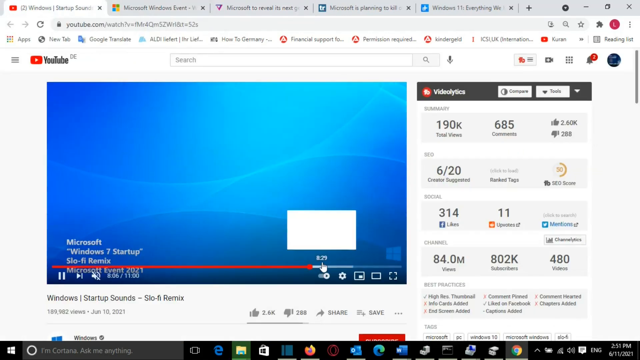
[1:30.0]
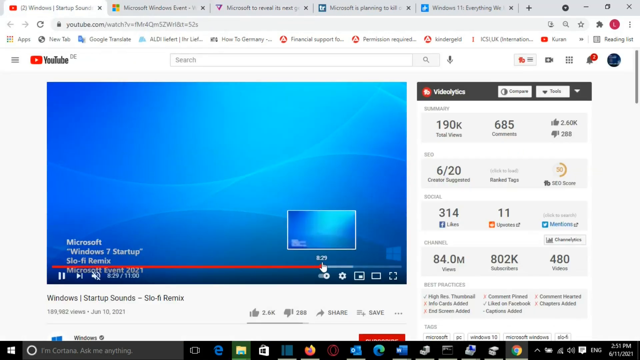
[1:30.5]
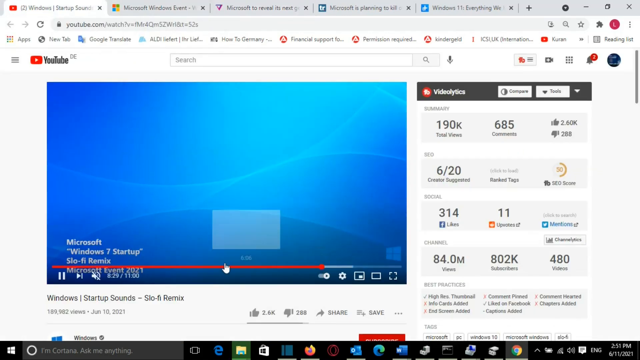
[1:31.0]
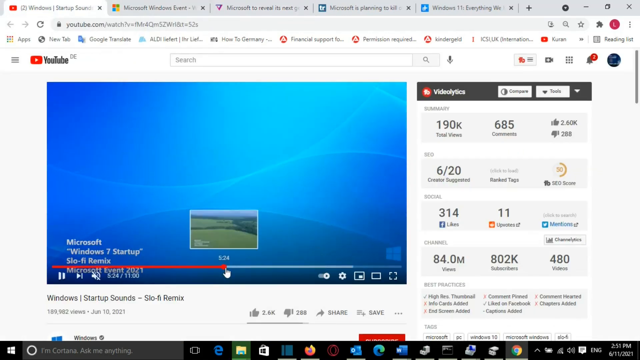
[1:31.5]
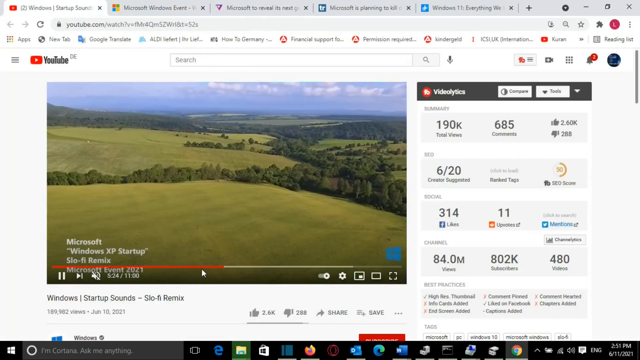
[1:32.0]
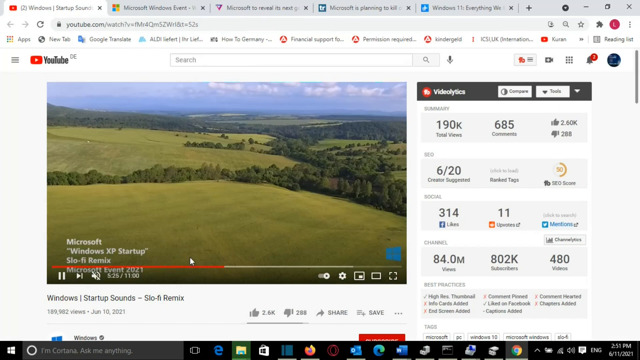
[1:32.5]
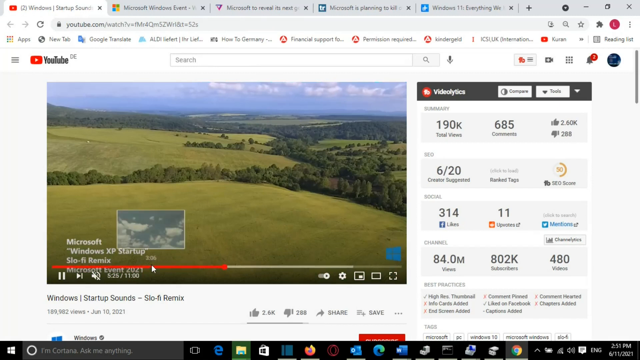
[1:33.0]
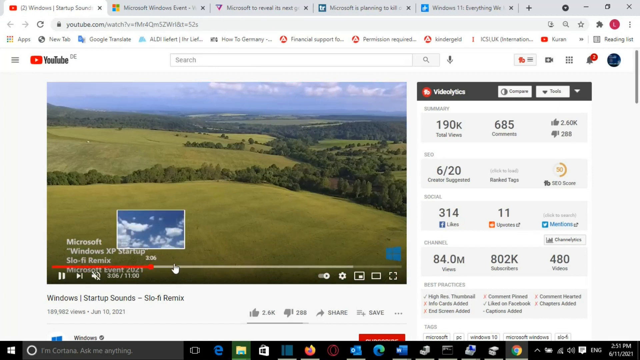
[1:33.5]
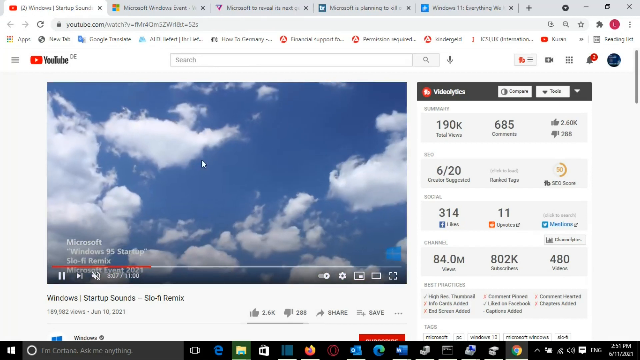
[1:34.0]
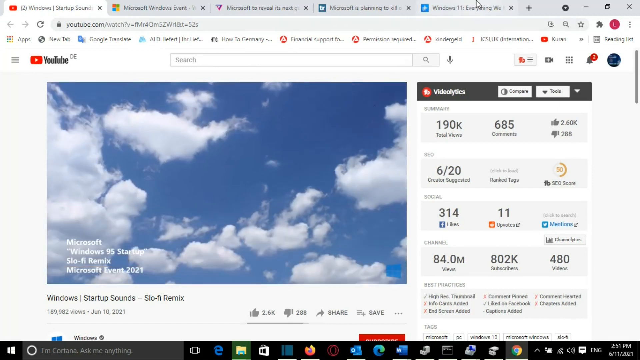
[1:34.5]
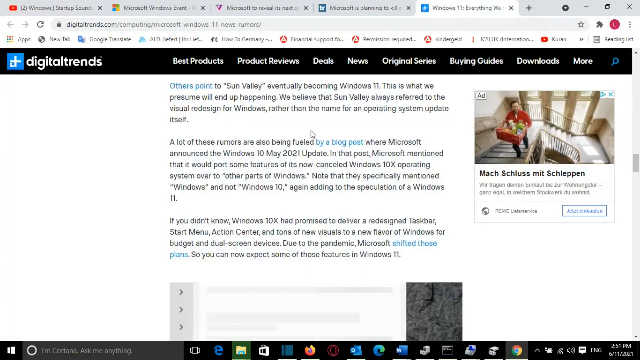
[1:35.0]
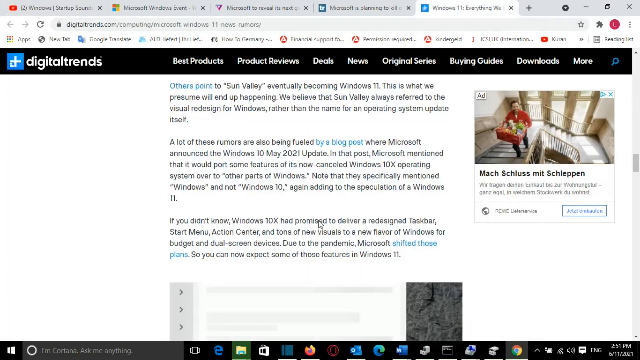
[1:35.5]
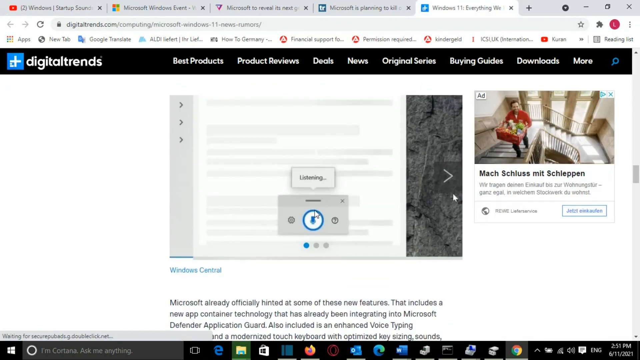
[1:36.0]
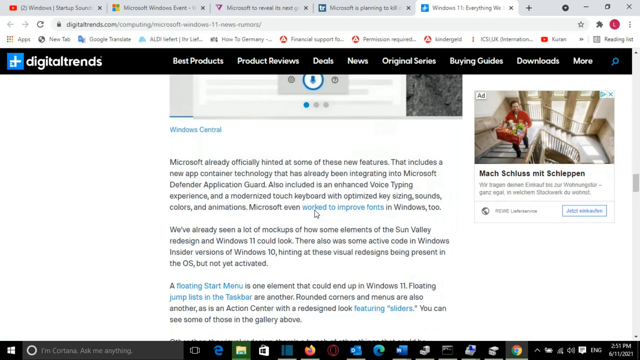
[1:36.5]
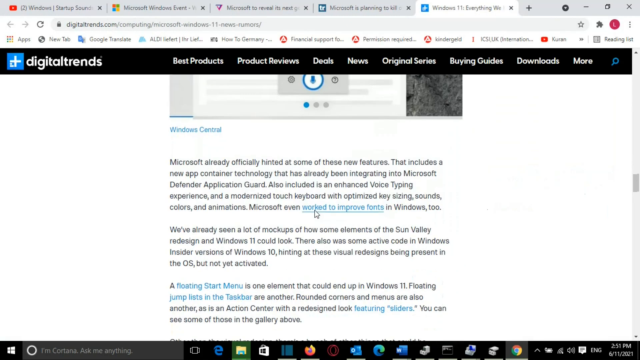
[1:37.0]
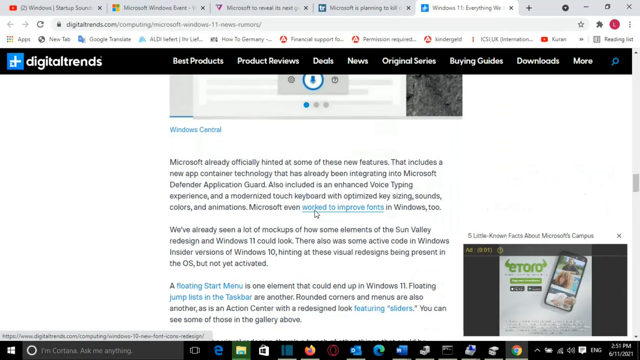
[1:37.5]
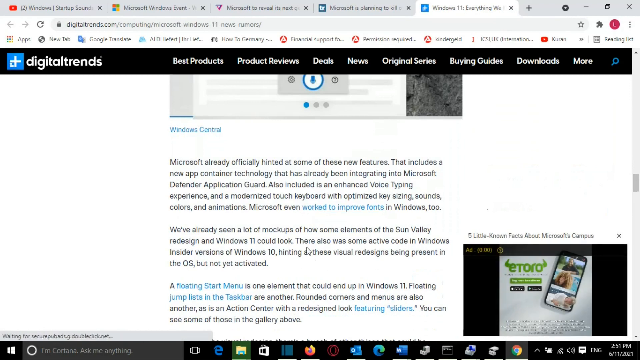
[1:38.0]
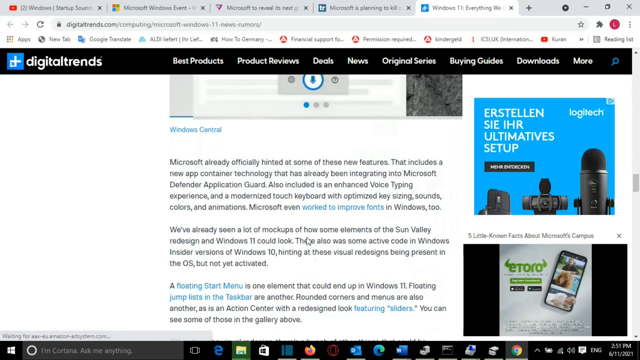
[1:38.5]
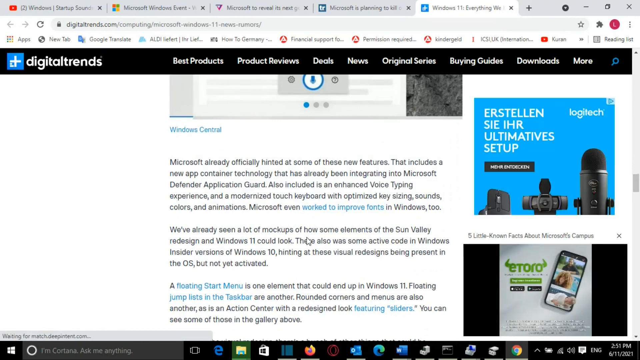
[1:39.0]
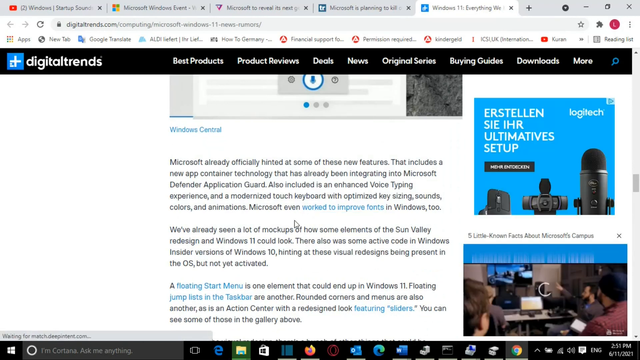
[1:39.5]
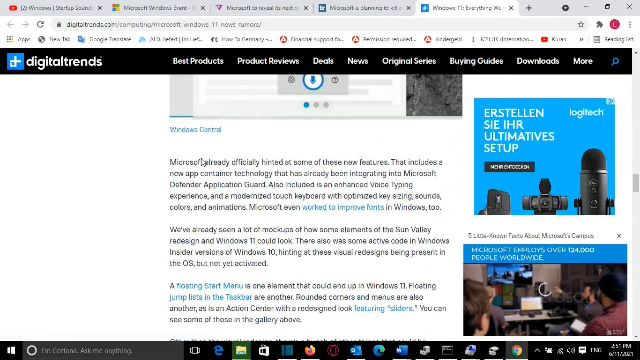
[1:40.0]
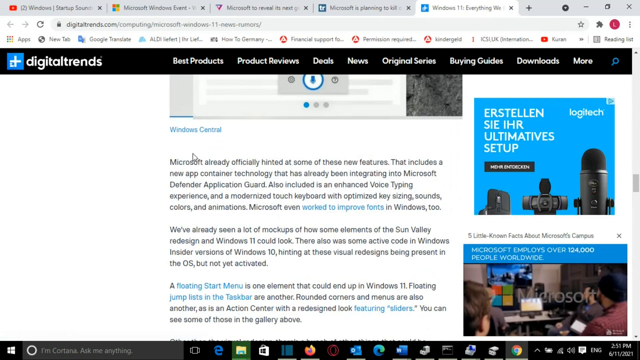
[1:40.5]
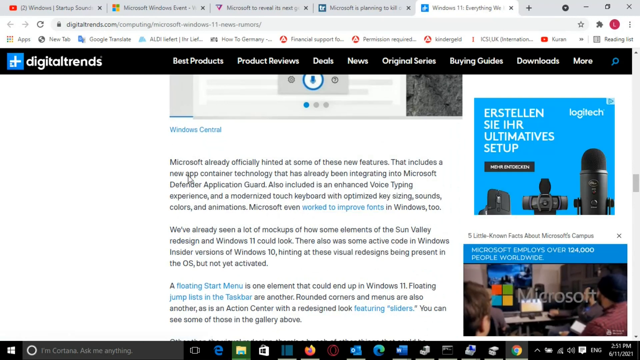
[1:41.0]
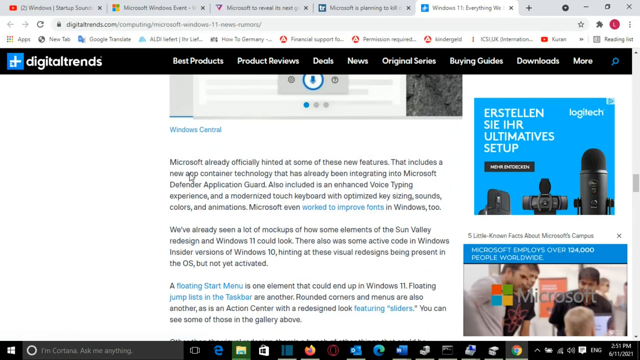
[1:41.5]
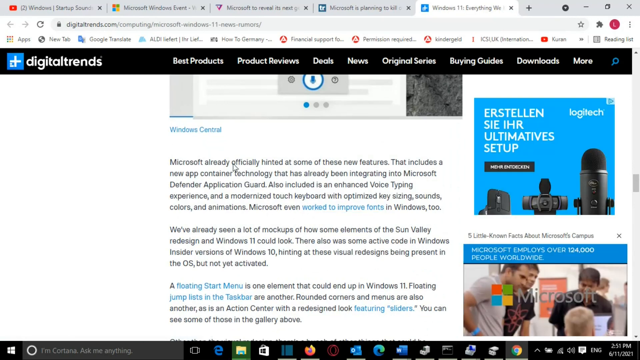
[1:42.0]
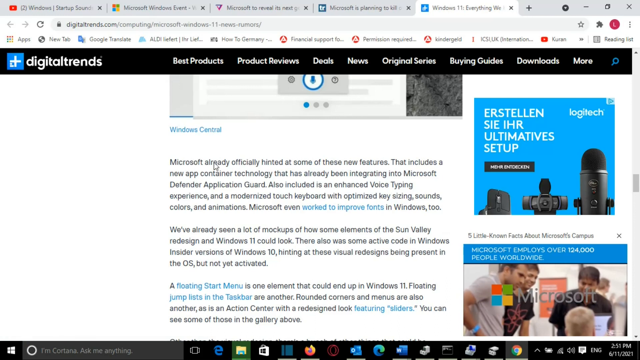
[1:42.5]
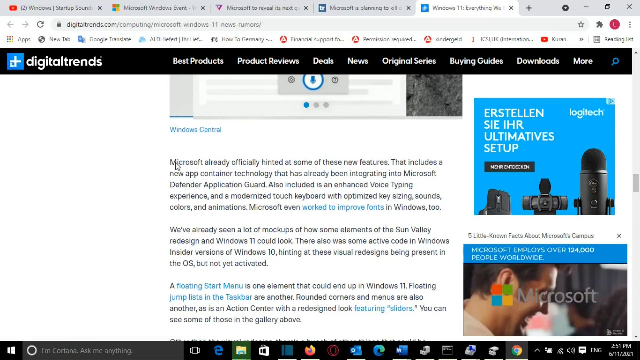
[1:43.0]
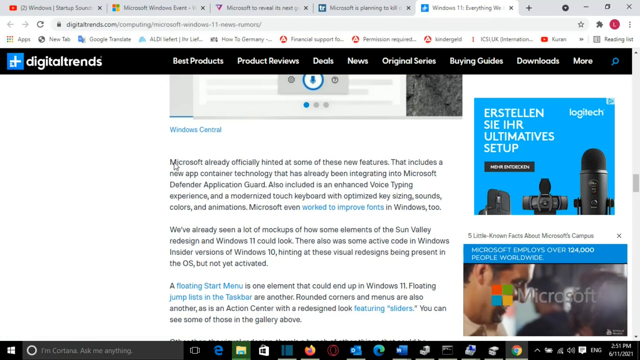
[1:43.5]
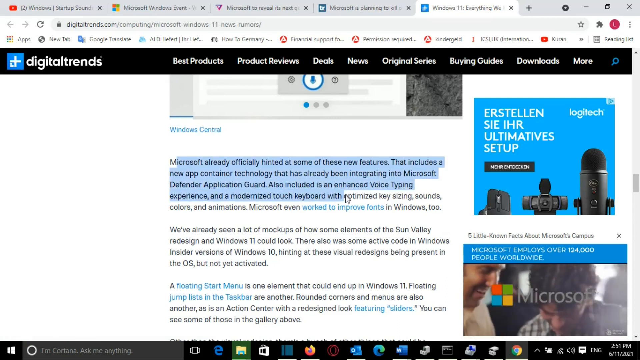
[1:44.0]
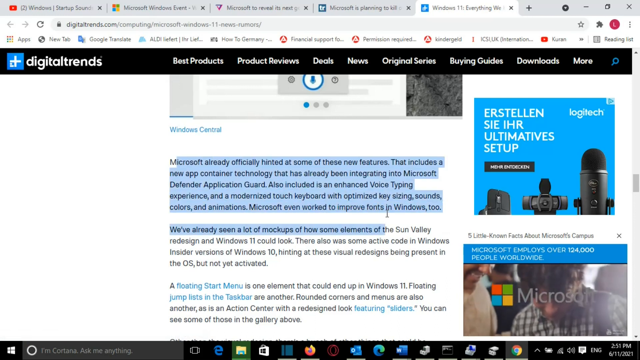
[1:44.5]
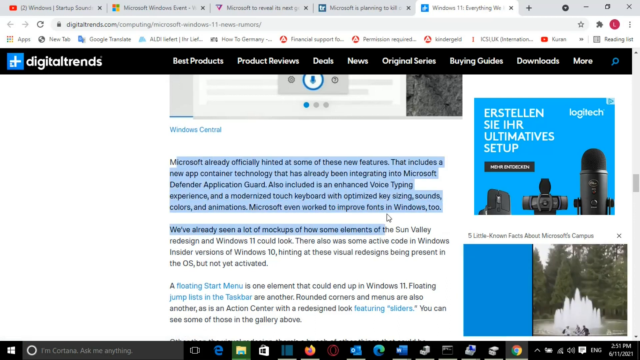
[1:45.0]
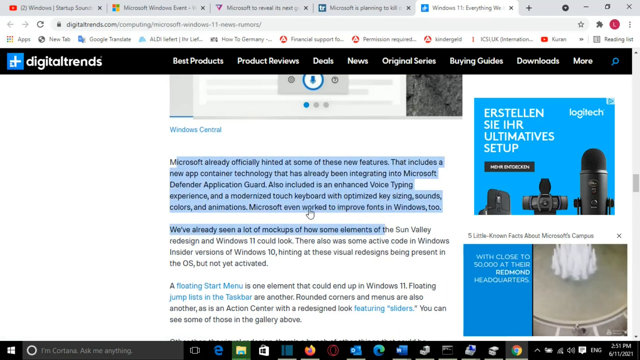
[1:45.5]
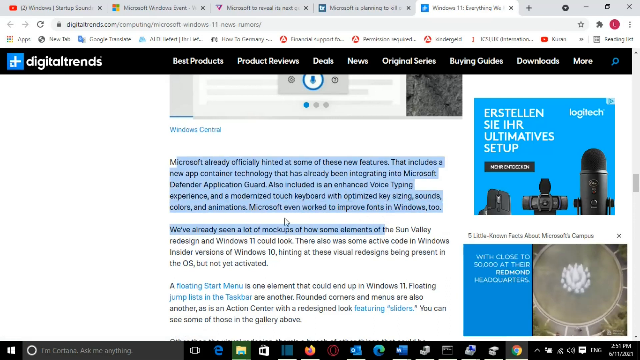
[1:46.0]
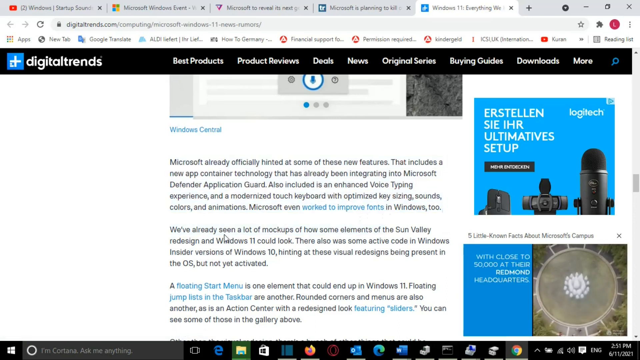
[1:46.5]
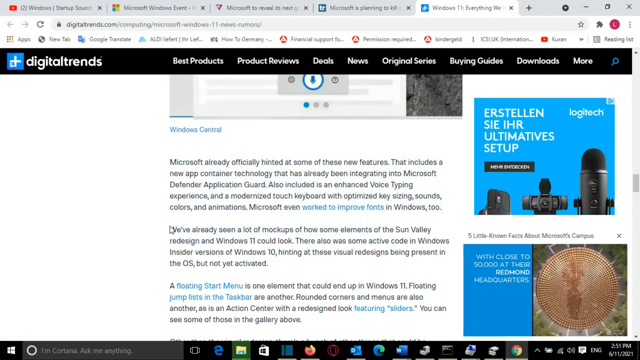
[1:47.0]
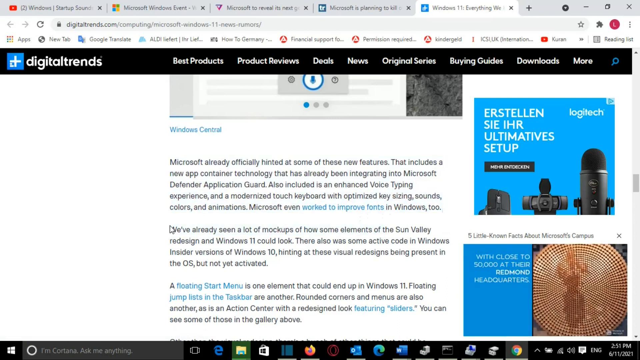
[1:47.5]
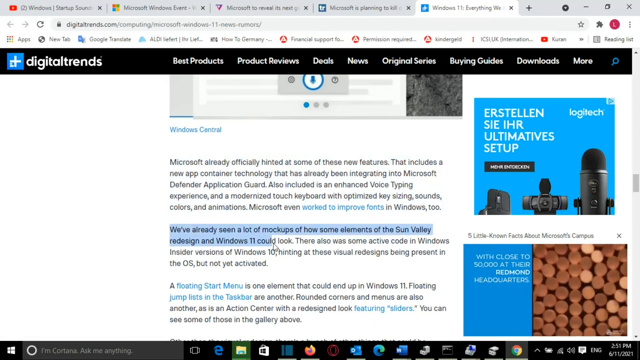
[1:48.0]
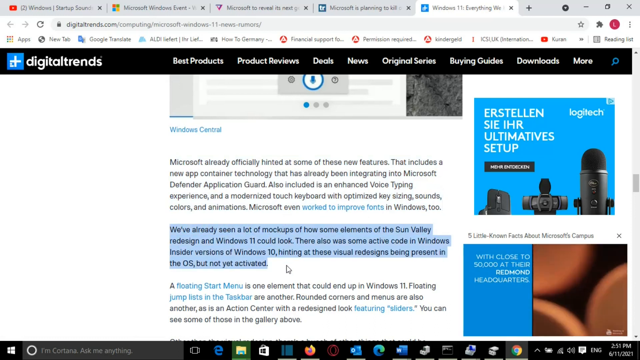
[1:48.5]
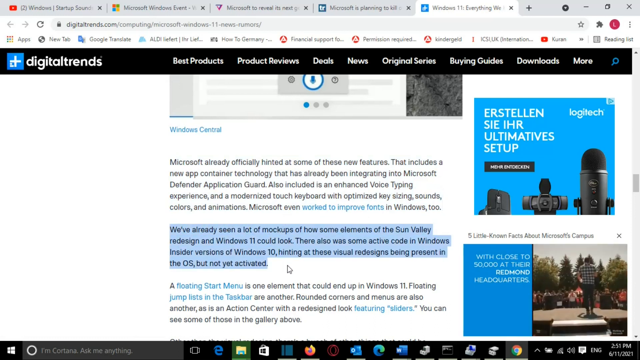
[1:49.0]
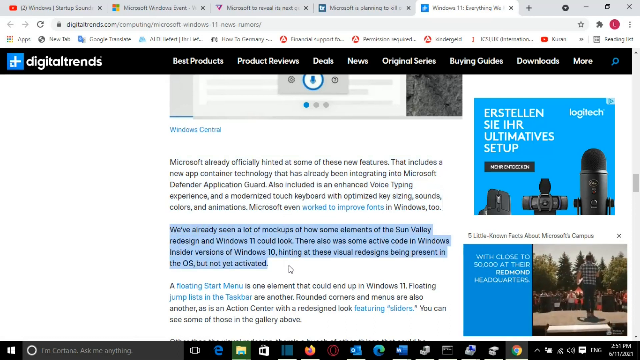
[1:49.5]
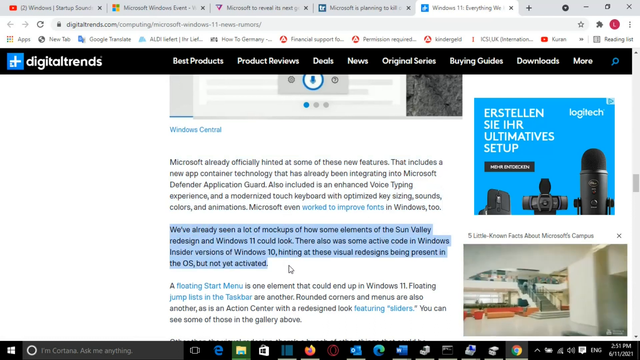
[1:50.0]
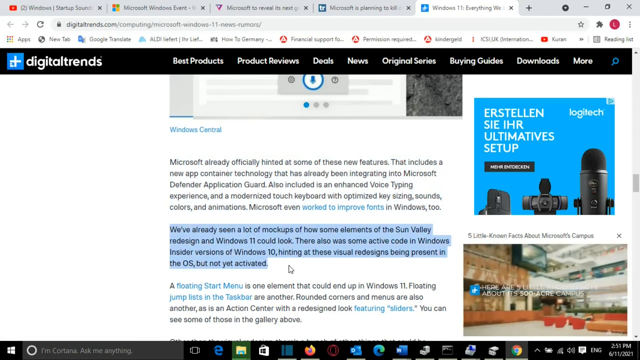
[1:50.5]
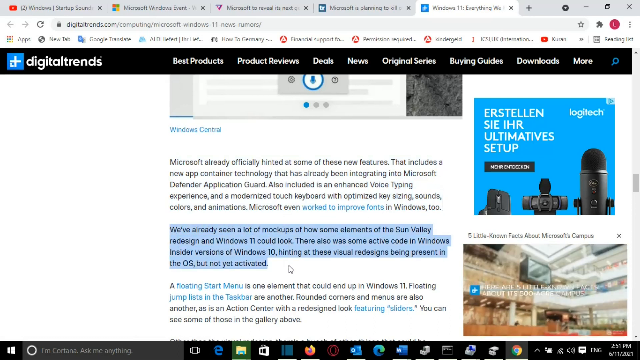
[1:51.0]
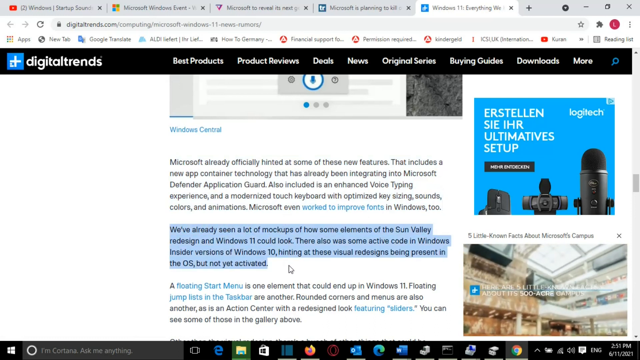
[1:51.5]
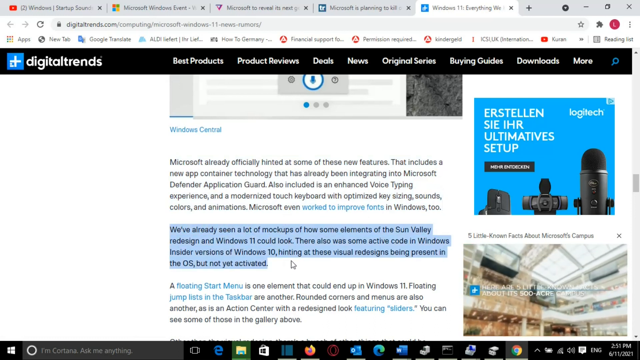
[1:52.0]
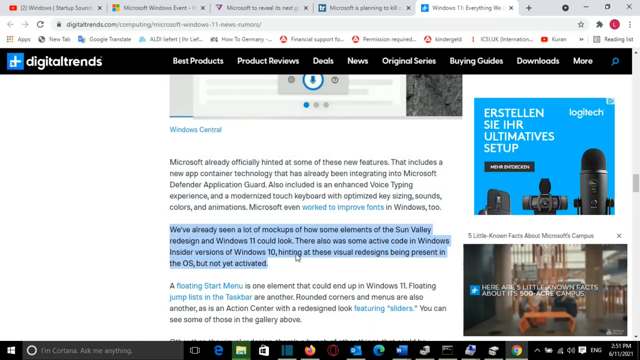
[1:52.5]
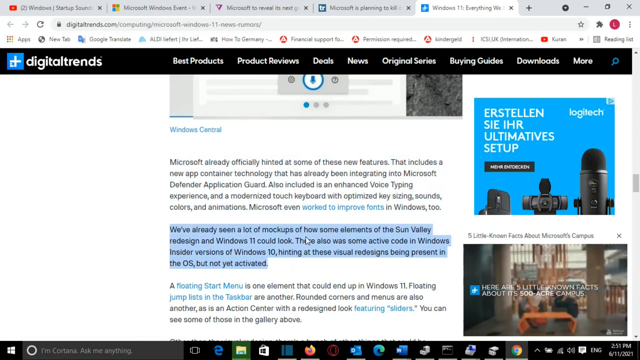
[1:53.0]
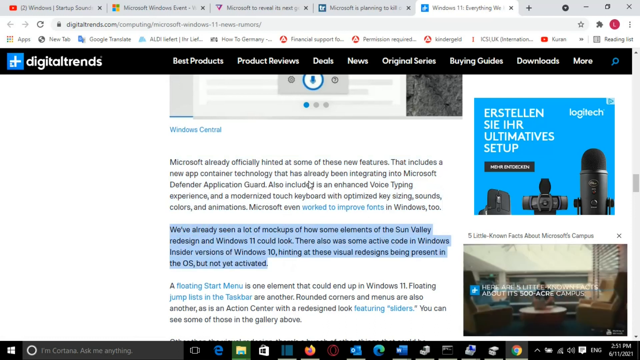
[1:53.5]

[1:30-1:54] A YouTube video plays on the website, apparently showing naturistic scenery, and a mouse cursor clicks on different timestamps or locations in the video. The cursor then clicks on another tab, digitaltrends.com, and the page scrolls down through what looks like an article. The cursor points to a passage and highlights a section reading "already officially hinted at some of these new features. That includes a new app containing a technology that has already been integrated into Microsoft Defender Application Guard. Also included is an enhanced voice typing experience and a modernized touch keyboard with optimized key sizing, sounds, colors, and animations. Microsoft even worked to improve fonts in Windows, too. We've already seen a lot of mockups of how some elements of the Sun Valley redesign and Windows 11 could look. There also was some active code in Windows Insider versions of Windows 10, hinting at these visual redesigns being present in the OS but not yet activated."